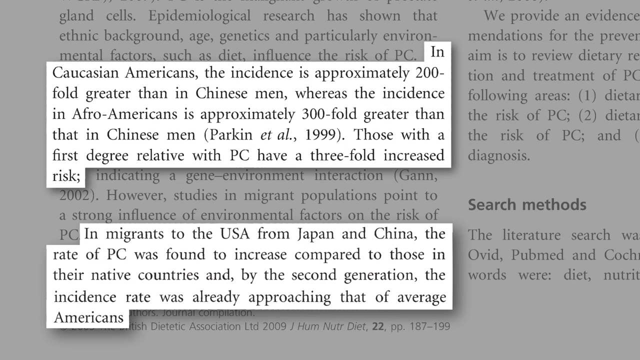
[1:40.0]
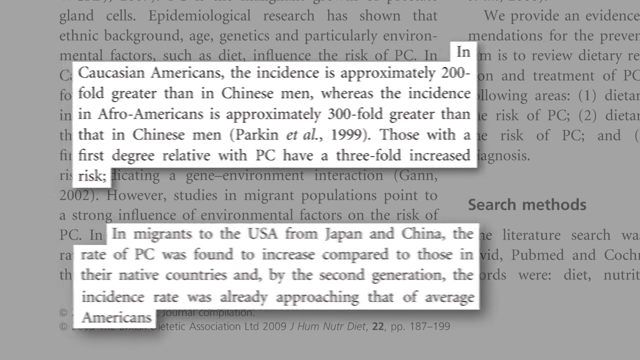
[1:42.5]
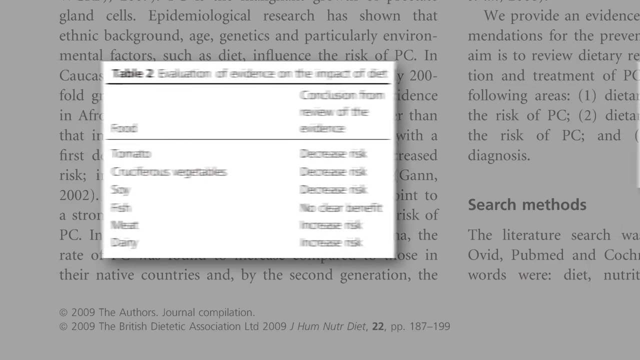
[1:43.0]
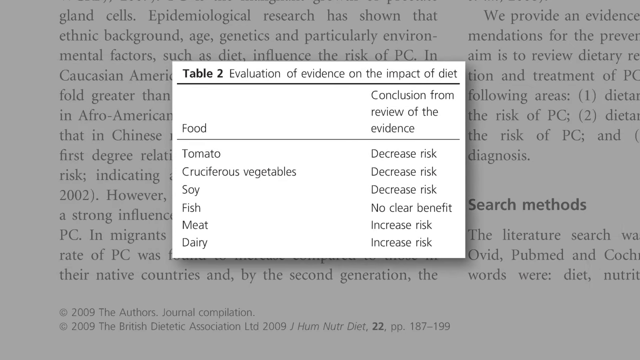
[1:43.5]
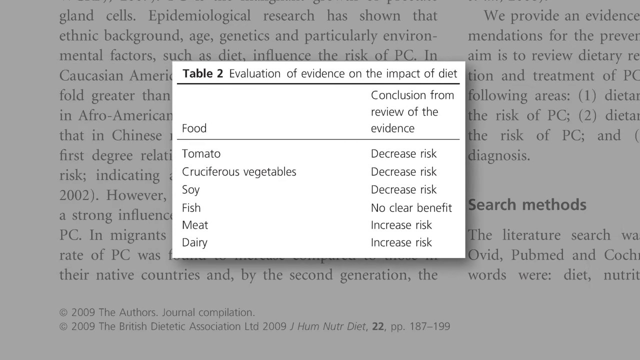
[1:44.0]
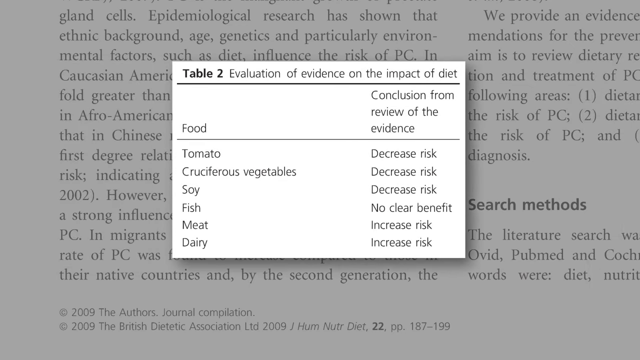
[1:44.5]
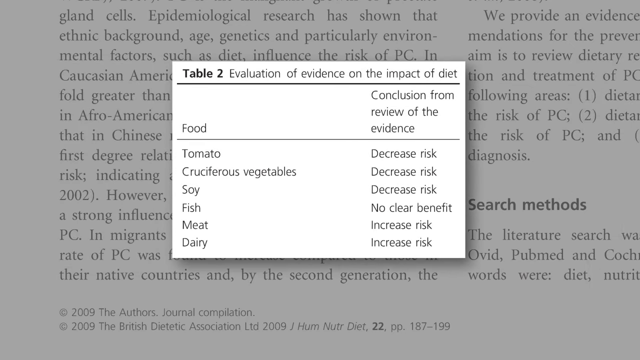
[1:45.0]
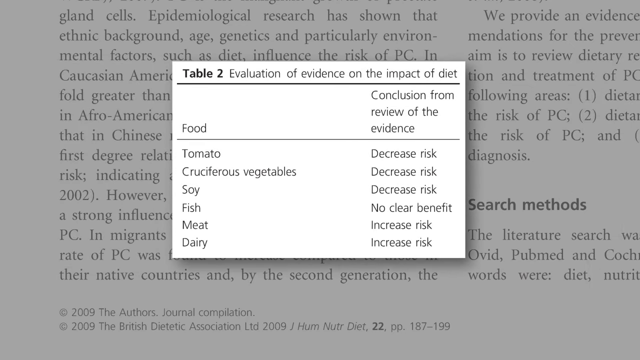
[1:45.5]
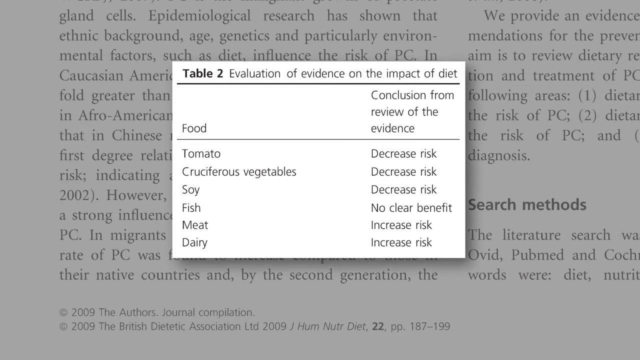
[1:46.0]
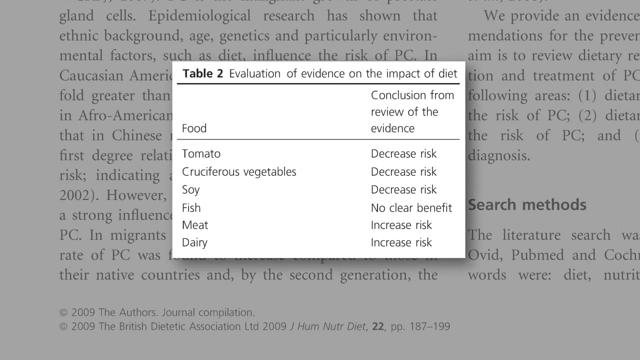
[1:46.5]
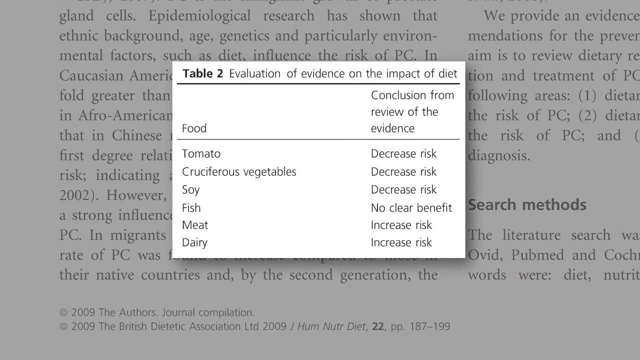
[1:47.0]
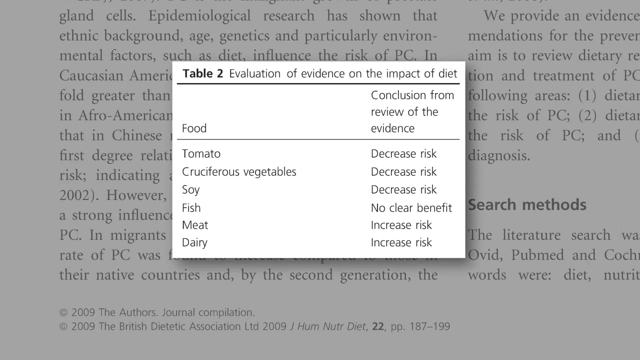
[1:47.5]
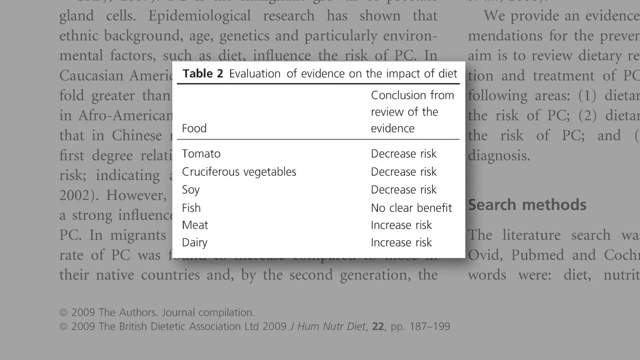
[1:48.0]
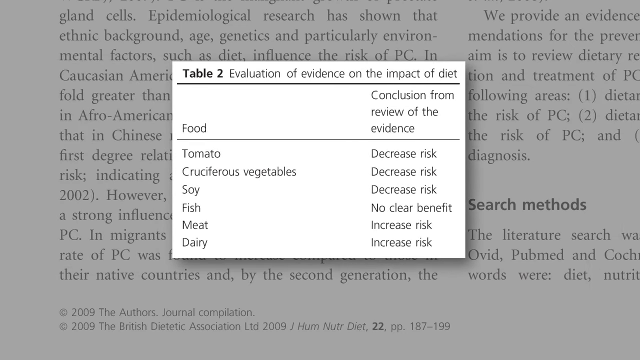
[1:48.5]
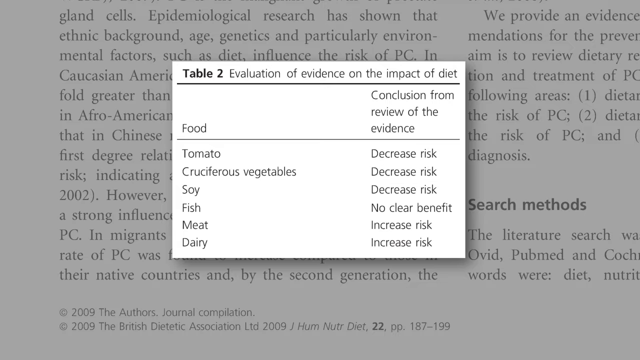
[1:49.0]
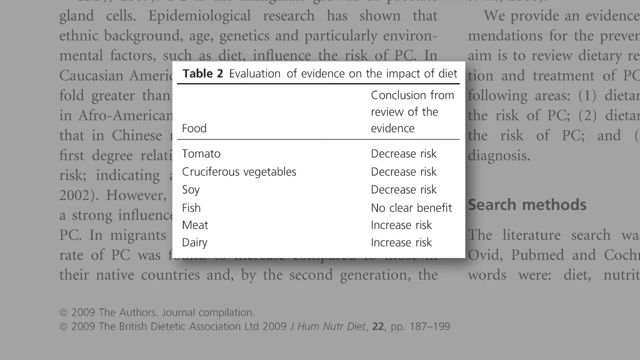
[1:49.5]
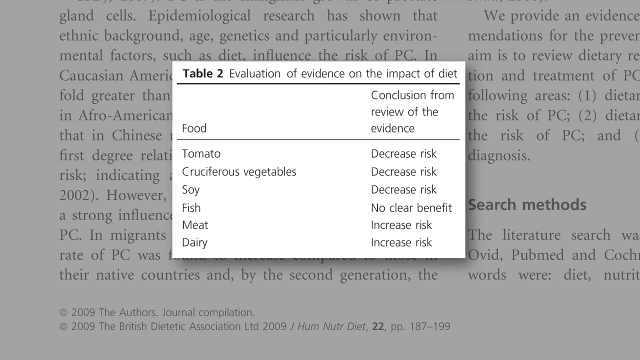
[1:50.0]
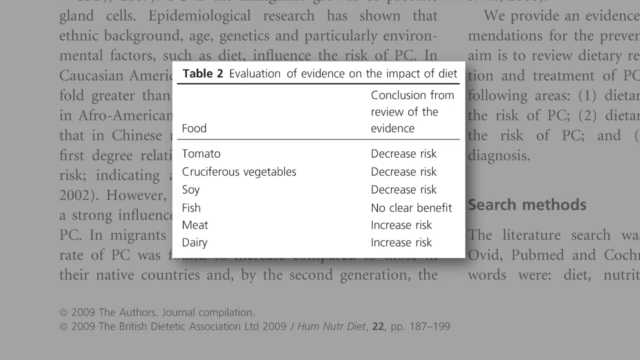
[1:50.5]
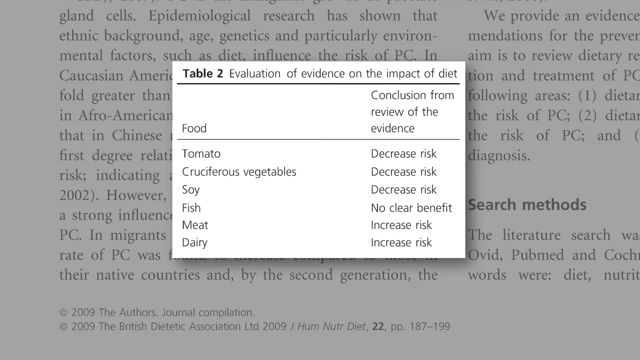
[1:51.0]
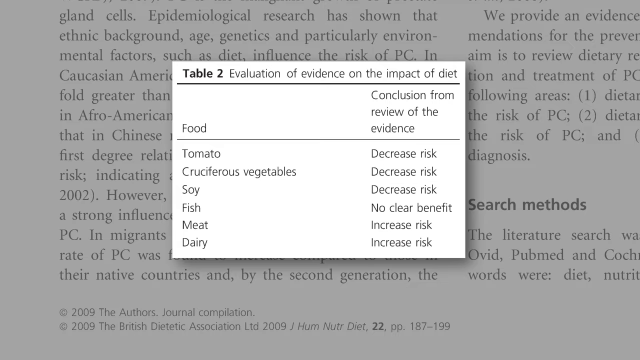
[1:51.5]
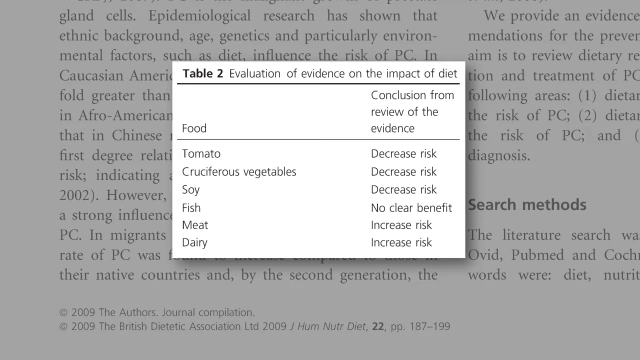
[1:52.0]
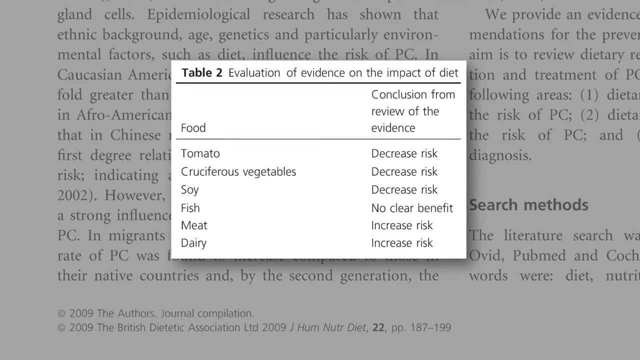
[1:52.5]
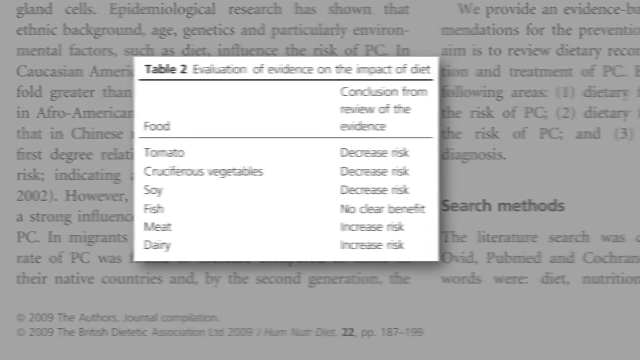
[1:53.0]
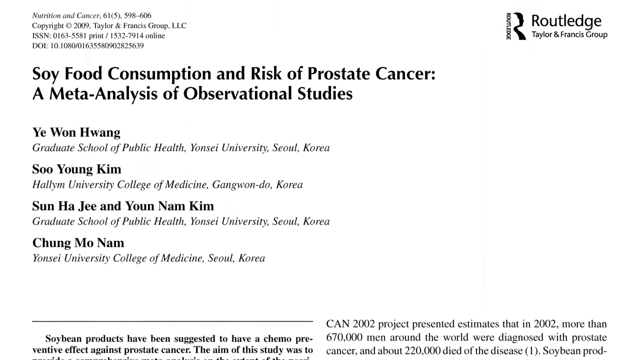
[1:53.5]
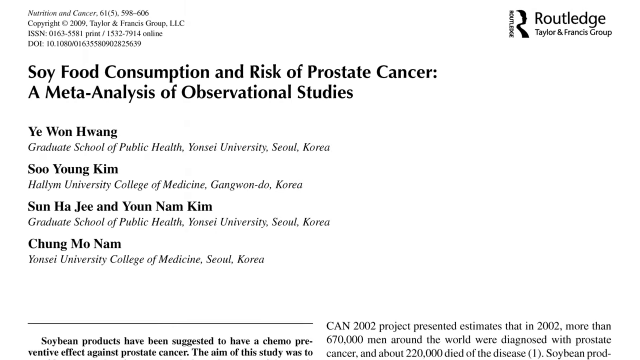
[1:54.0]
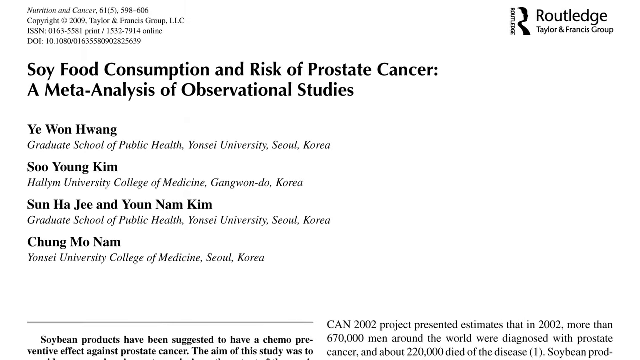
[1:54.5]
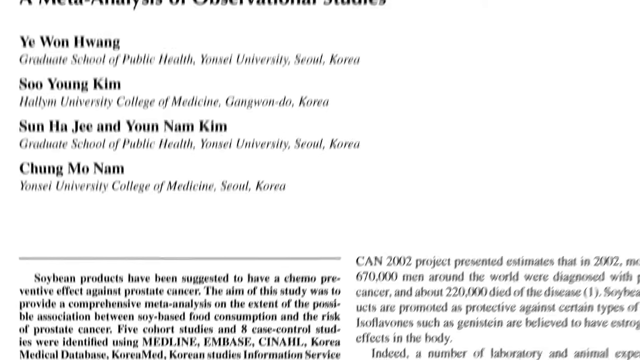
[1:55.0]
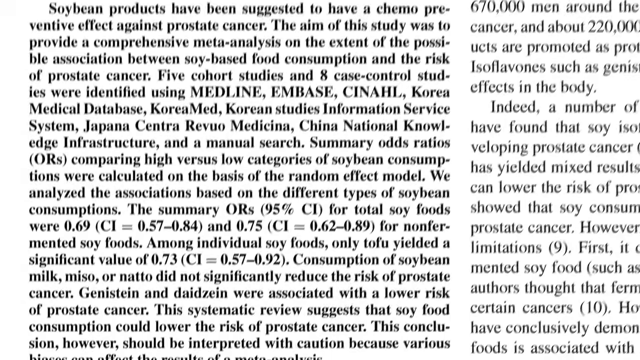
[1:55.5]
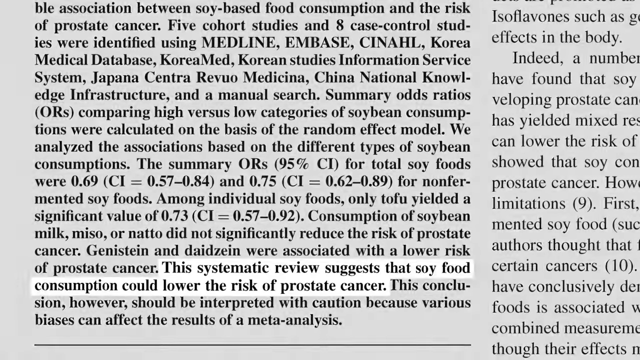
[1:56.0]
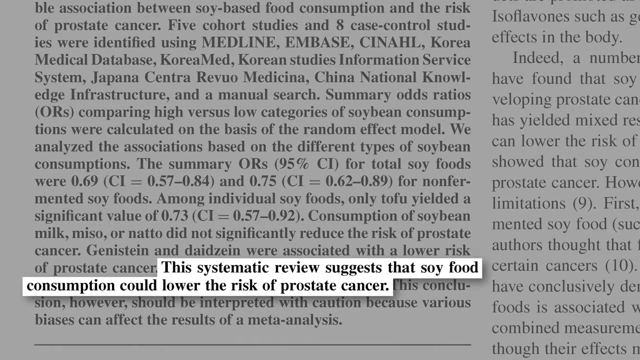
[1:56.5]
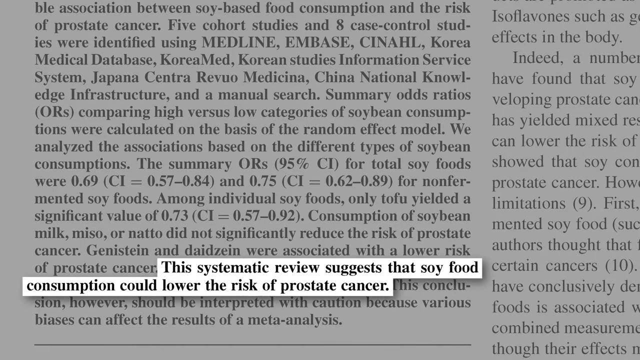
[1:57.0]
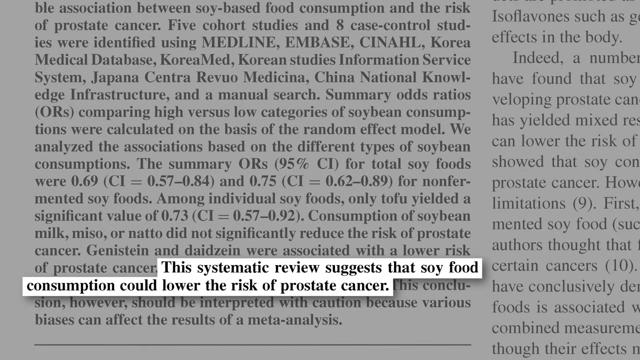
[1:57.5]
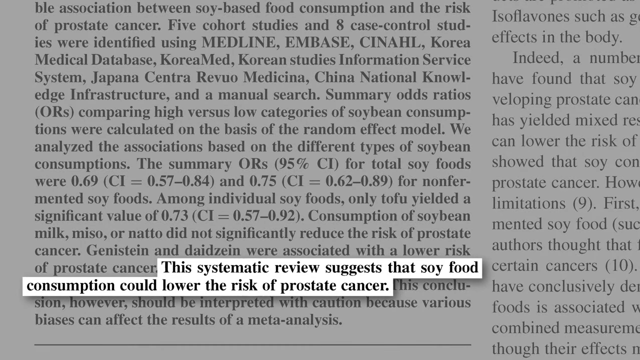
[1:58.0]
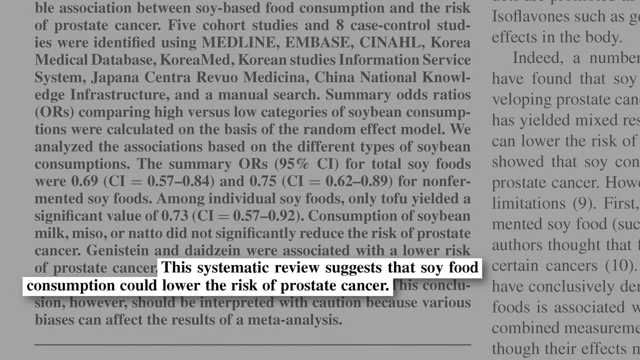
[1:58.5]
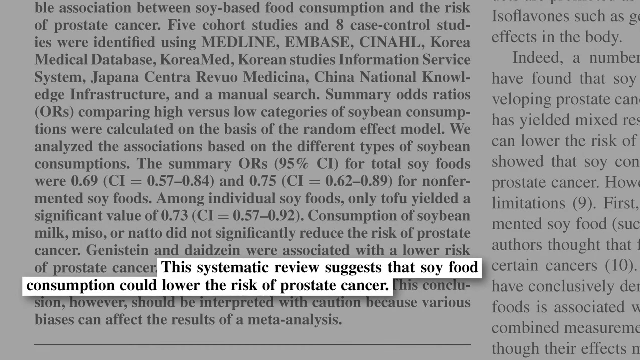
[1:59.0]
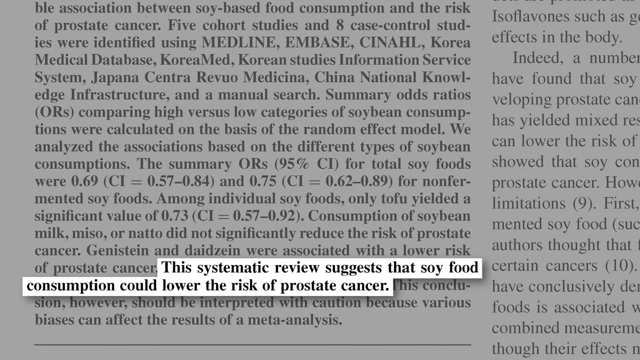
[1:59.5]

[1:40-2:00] The video returns to "Table 2: Evaluation of evidence on the impact of diet", with the same information: tomato, cruciferous vegetables and soy decrease the risk of prostate cancer, fish has no clear benefit, and meat and dairy increase it. It then moves to another research paper from the Routledge, Taylor and Francis Group, titled "Soy food consumption and risk of prostate cancer: a meta-analysis of observational studies". Four authors from different universities in South Korea are listed, the first being Ye-Won Hwang. The paper is very long, and a highlighted cutout sentence reads "This systematic review suggests that soy food consumption could lower the risk of prostate cancer."